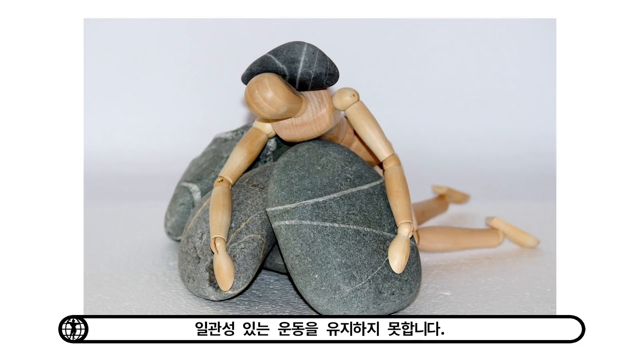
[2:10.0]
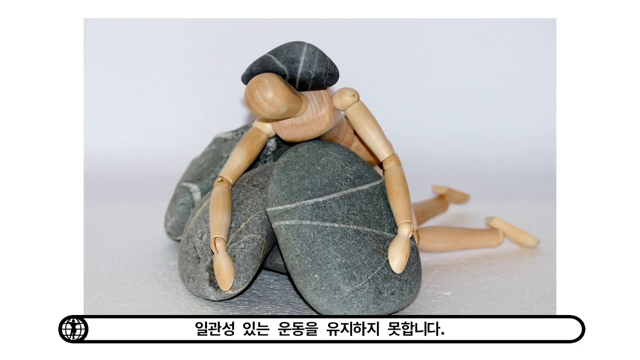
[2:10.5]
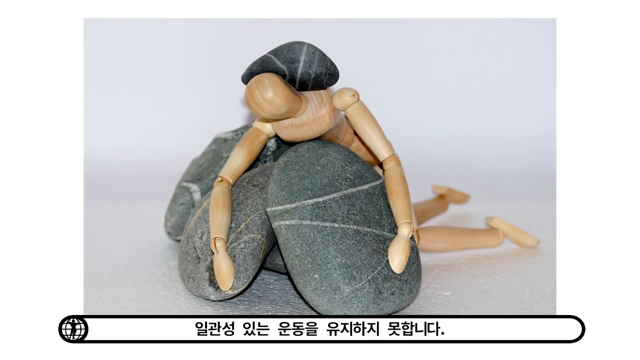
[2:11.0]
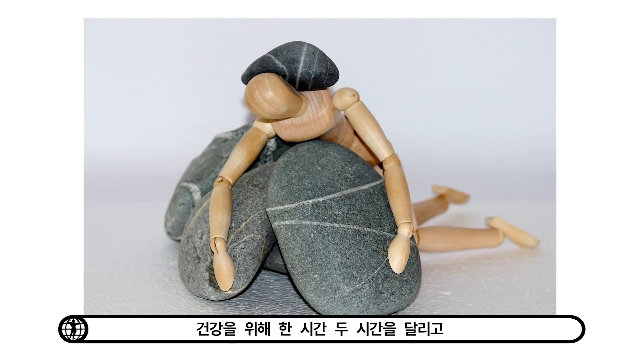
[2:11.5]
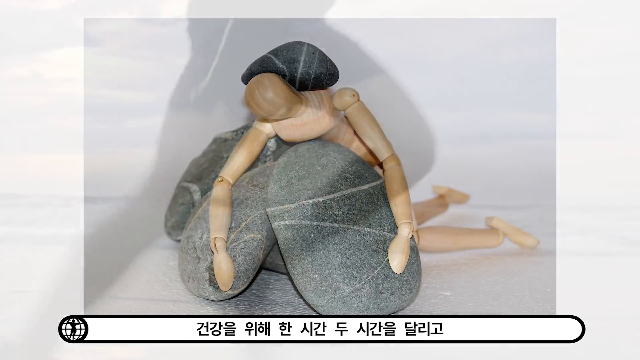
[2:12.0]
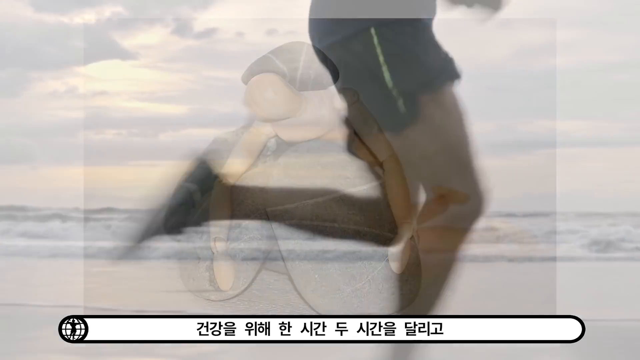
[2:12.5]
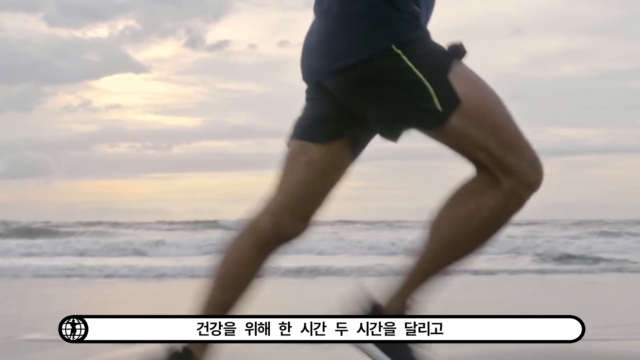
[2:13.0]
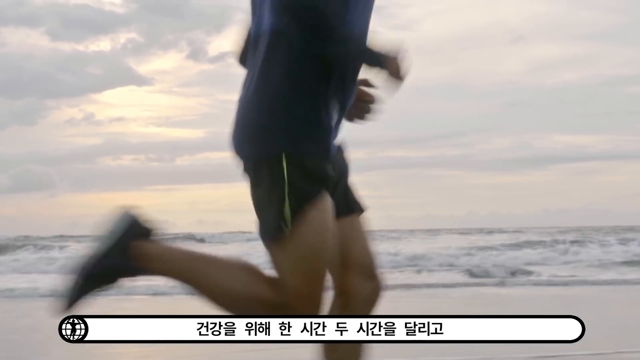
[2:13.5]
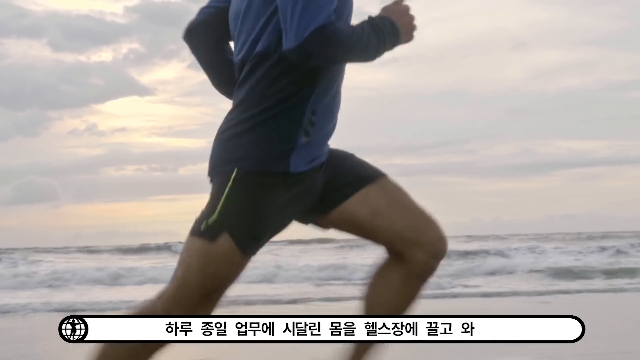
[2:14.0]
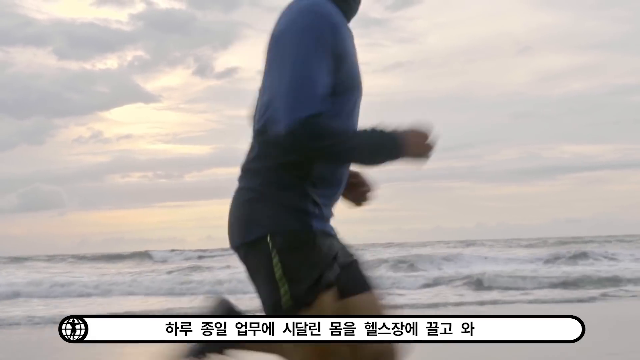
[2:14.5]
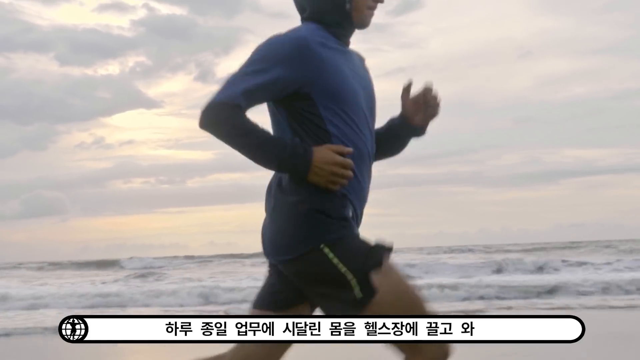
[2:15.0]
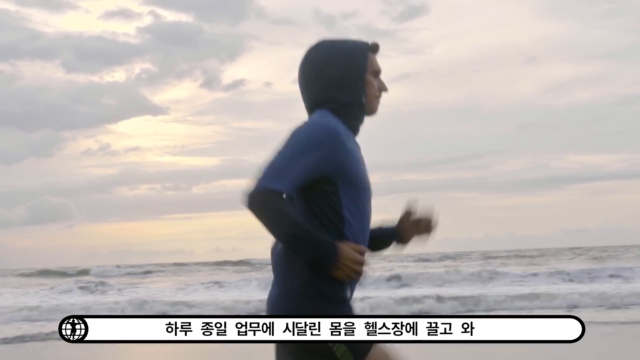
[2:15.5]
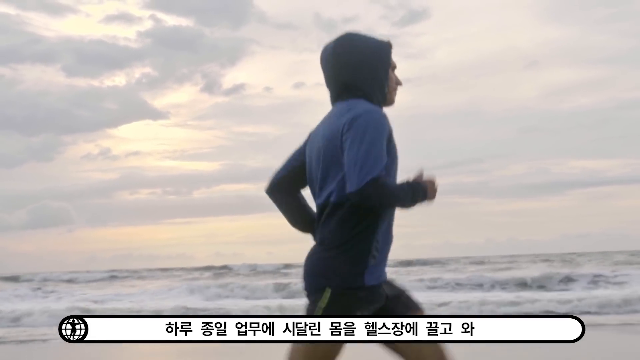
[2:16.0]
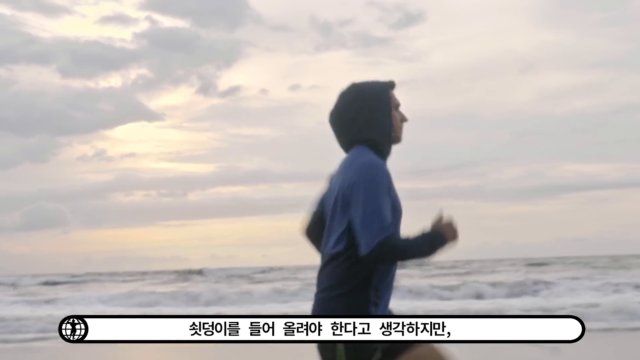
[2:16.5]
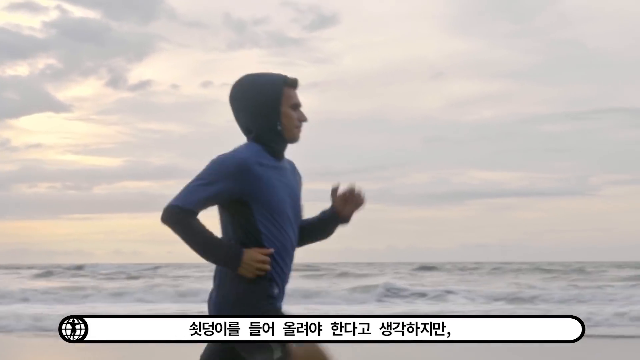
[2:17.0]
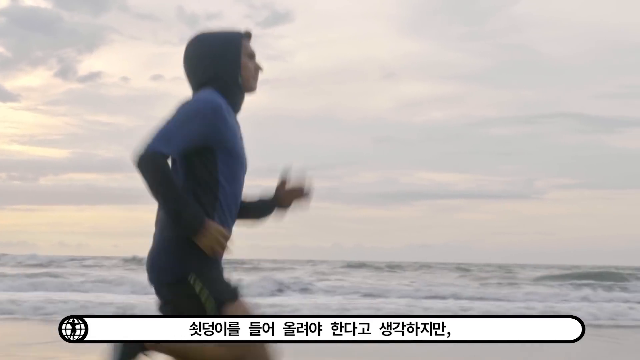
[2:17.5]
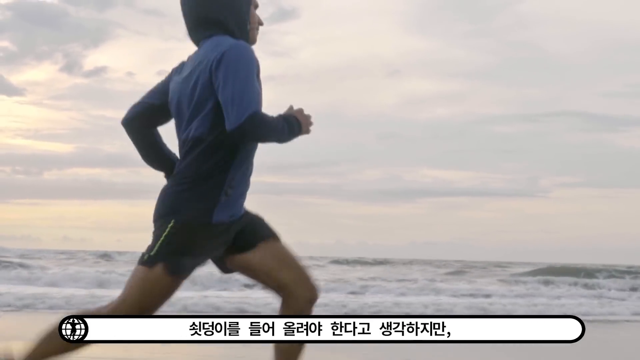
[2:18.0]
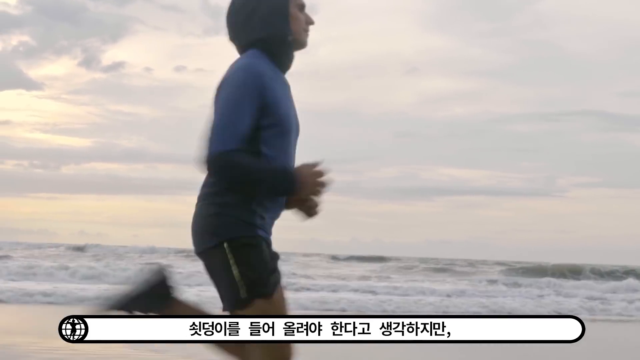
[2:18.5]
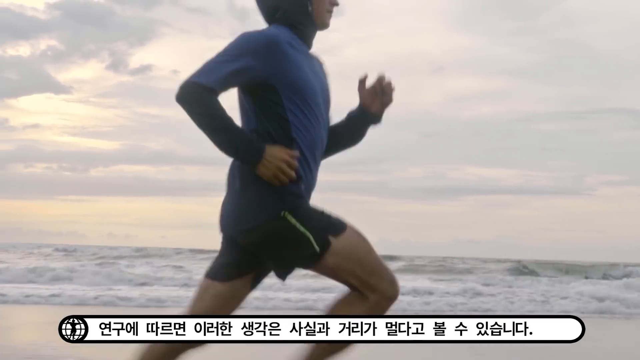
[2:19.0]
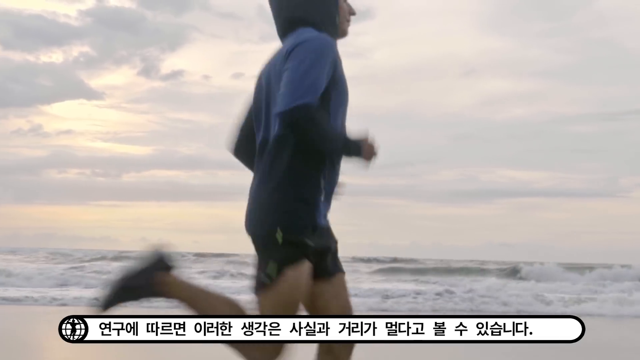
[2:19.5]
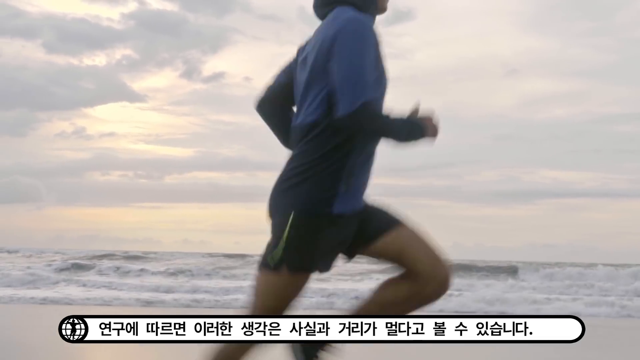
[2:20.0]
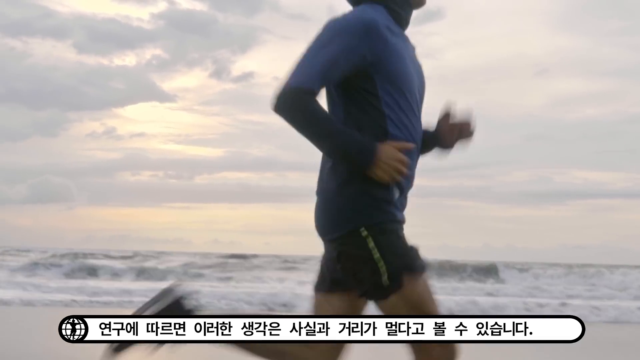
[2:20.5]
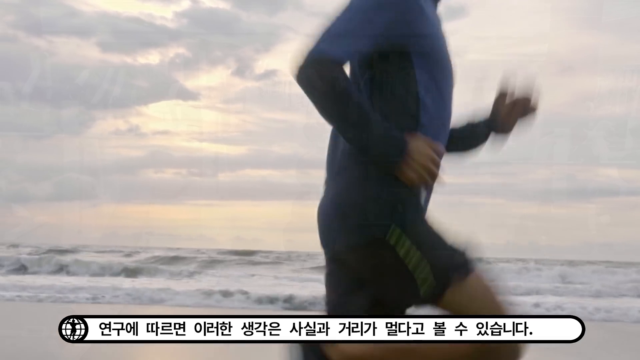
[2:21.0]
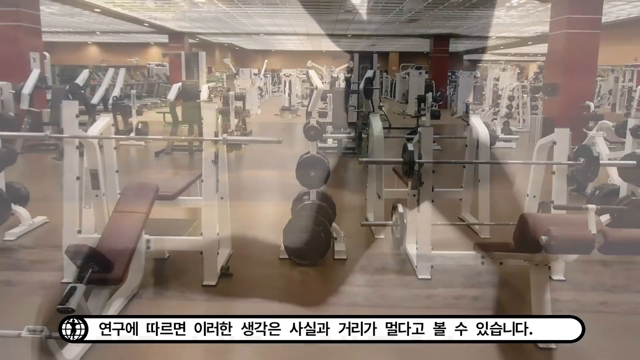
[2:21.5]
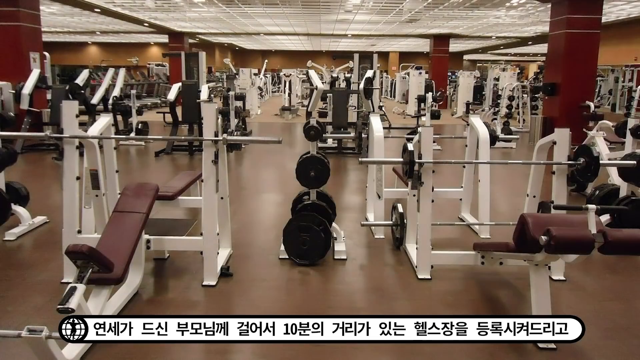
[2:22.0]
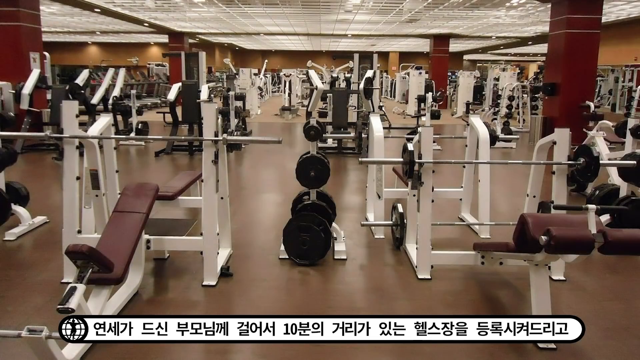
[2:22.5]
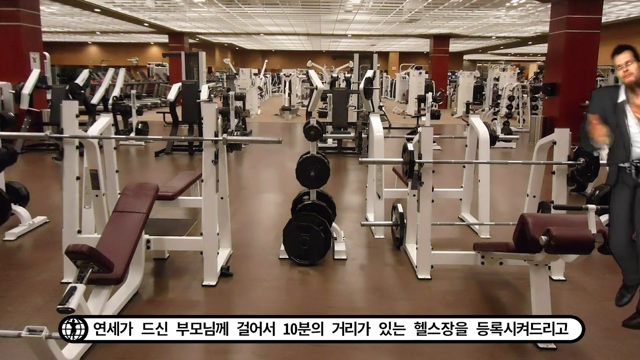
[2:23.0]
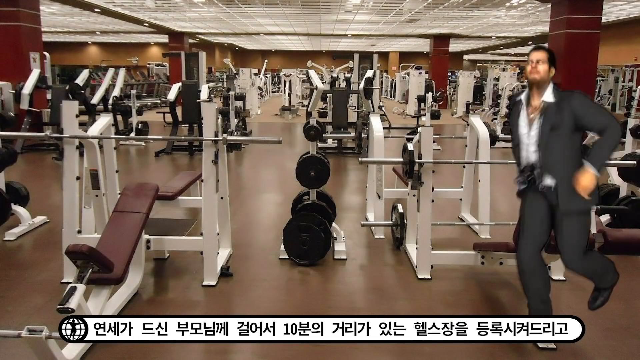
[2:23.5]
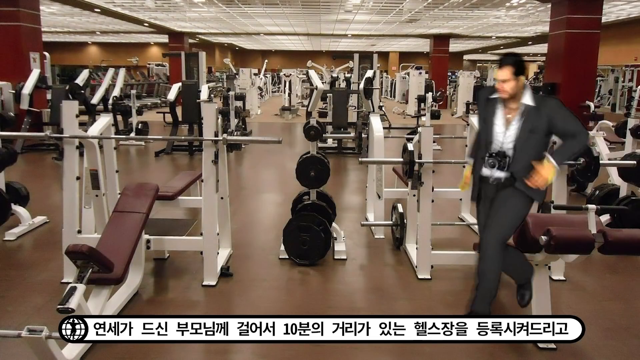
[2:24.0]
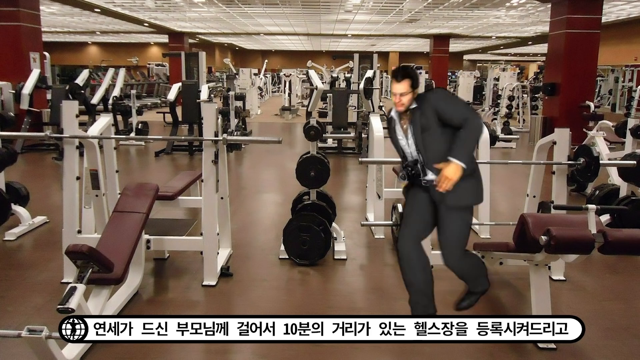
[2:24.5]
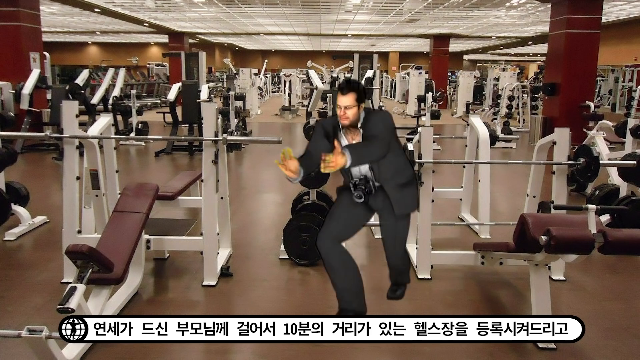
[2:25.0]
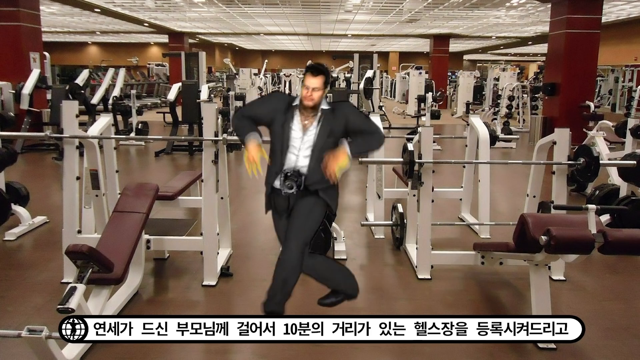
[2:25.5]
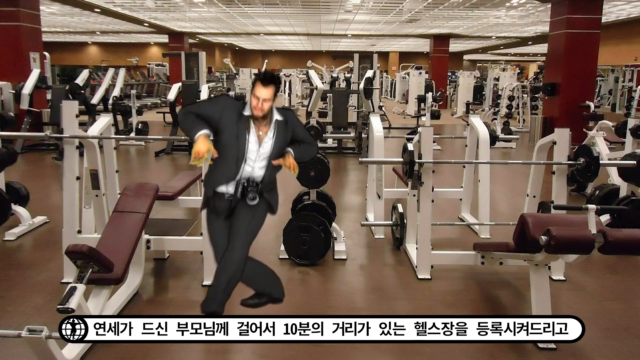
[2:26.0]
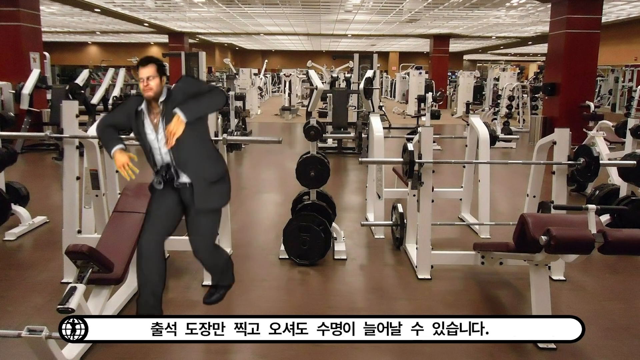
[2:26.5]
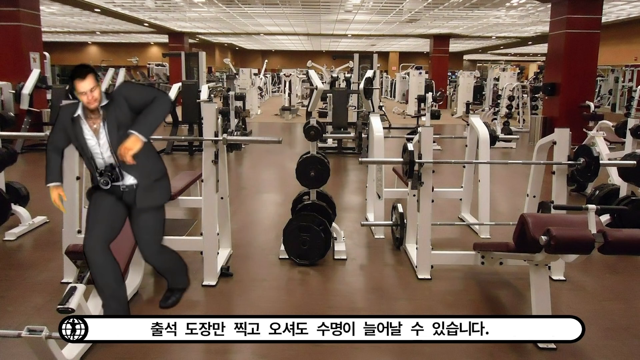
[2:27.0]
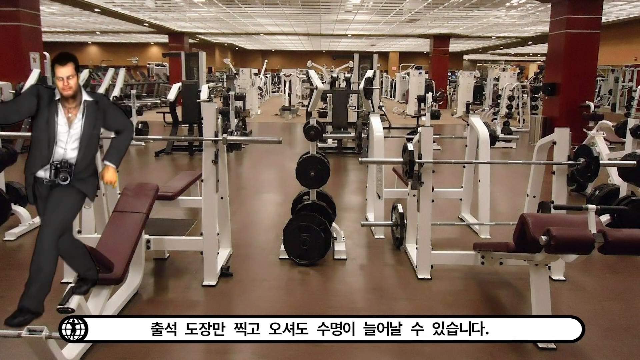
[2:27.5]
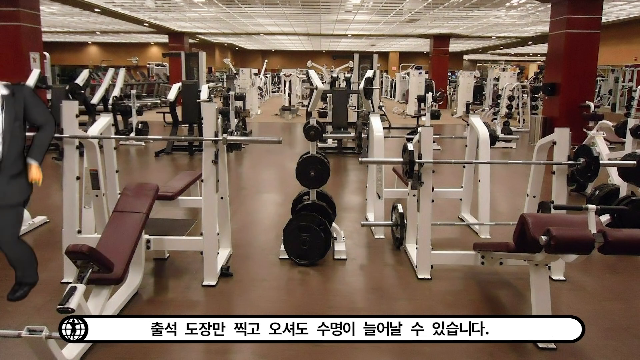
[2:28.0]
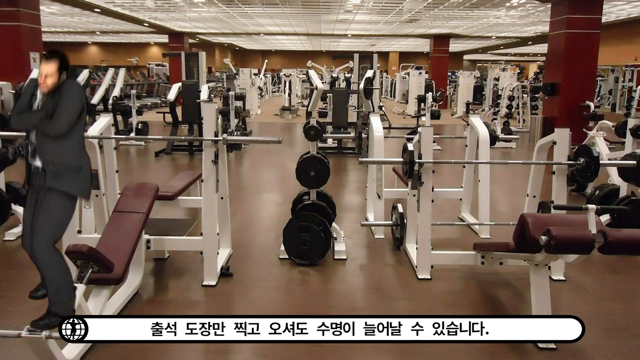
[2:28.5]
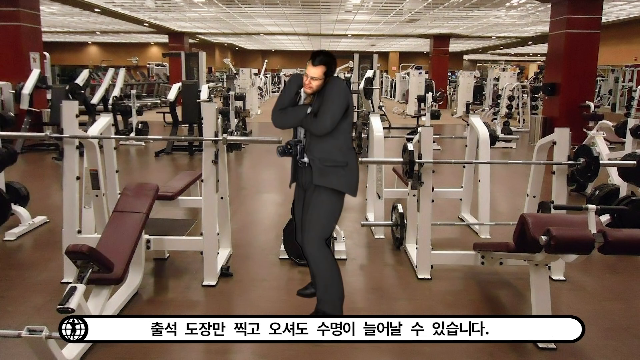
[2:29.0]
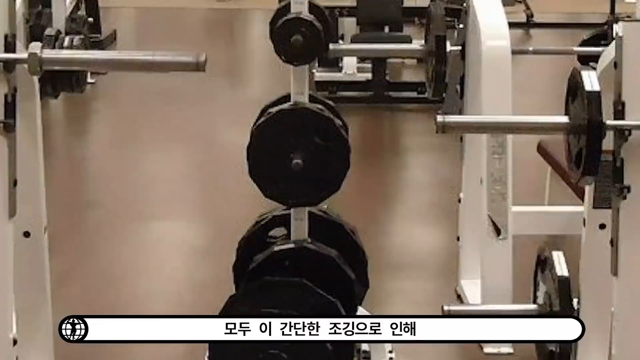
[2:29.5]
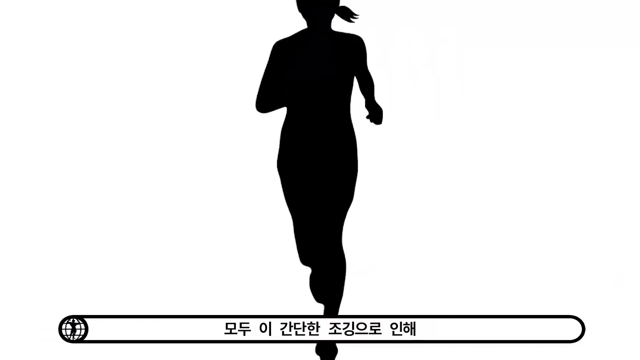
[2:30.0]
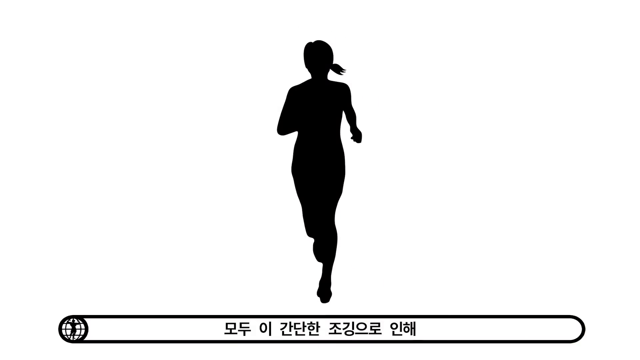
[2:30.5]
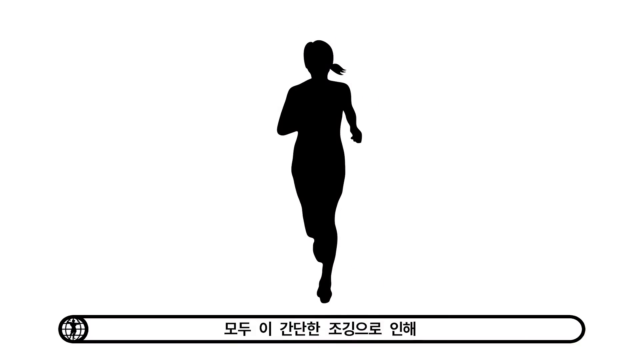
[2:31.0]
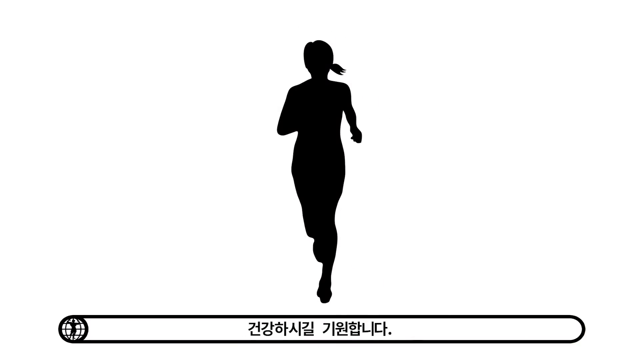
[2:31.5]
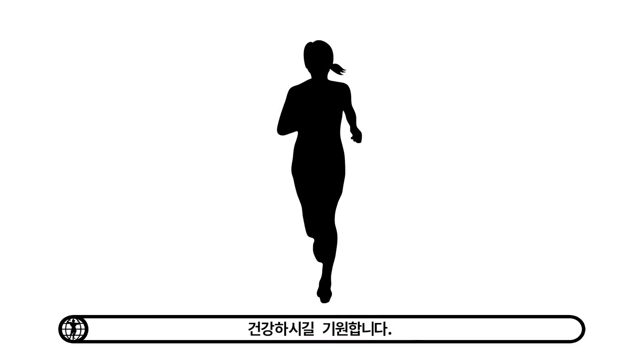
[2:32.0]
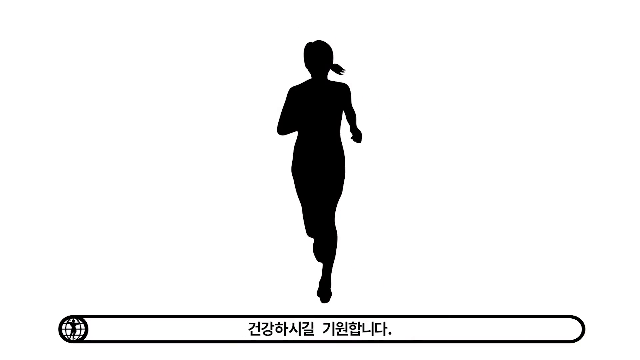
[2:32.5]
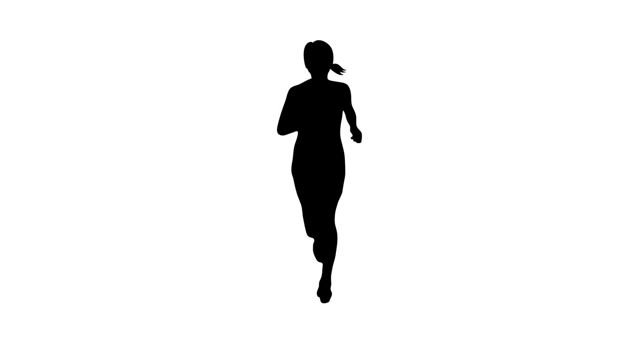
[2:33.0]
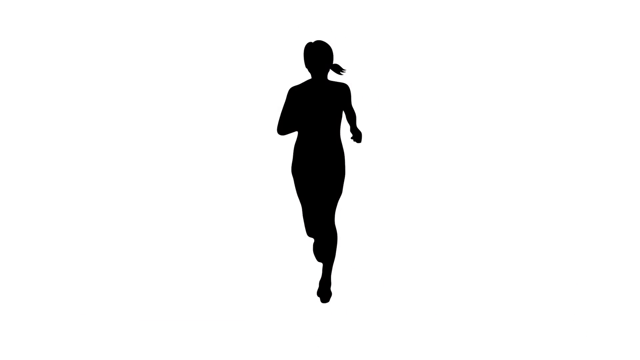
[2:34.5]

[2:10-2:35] A man in a hoodie jogs along the beach; it looks like early morning, with the sun about to rise. The video then cuts to an empty gym with a lot of Nautilus equipment and all kinds of gym machines. An avatar of a running man appears in front of the empty gym, running across it and dancing from right to left while pointing to the screen. At the end, a black silhouette of a woman jogs. A banner of Asian ideograms is at the bottom of the frame.